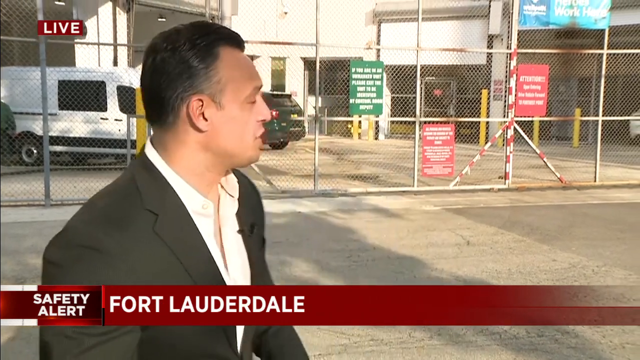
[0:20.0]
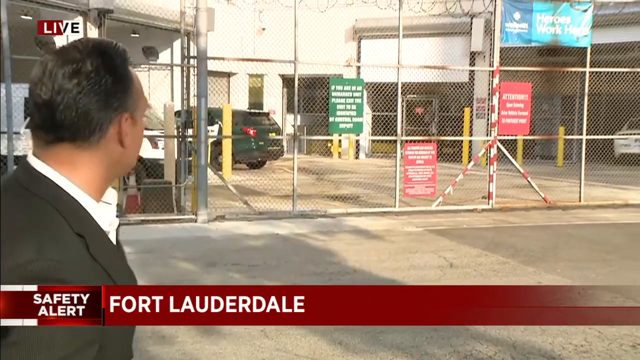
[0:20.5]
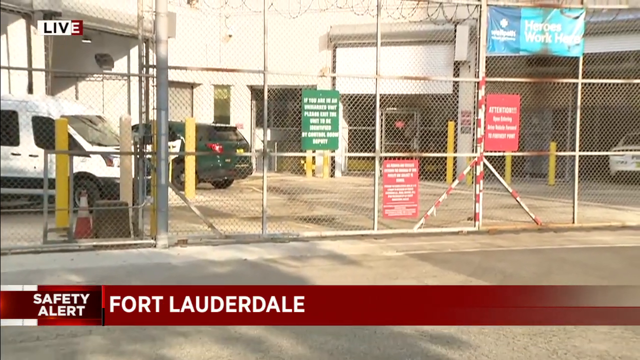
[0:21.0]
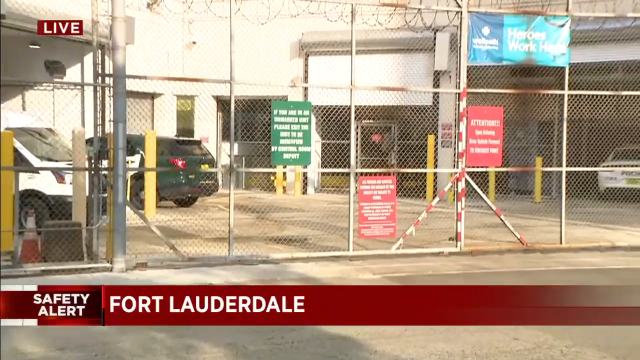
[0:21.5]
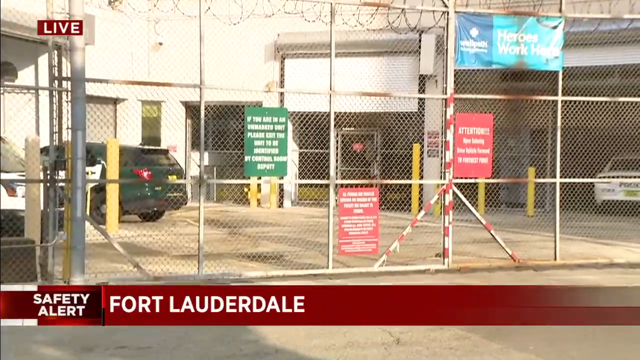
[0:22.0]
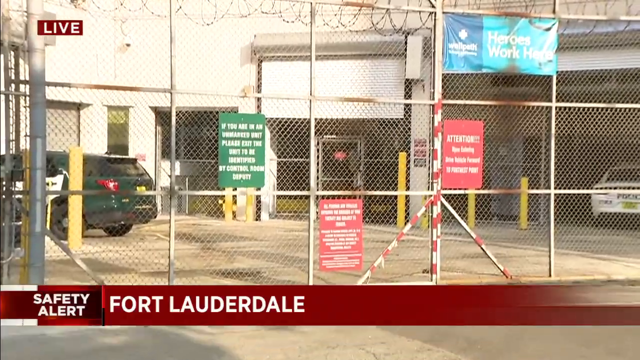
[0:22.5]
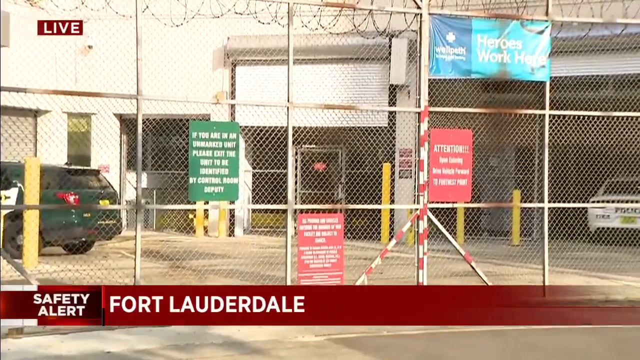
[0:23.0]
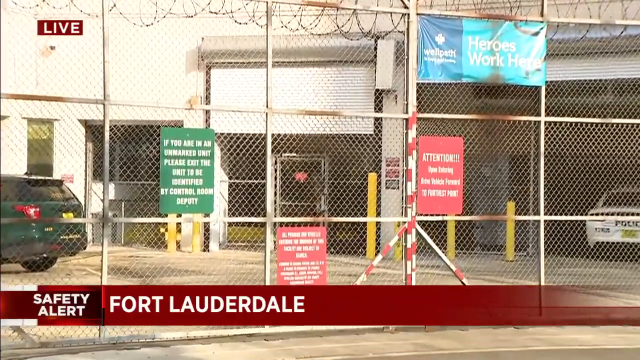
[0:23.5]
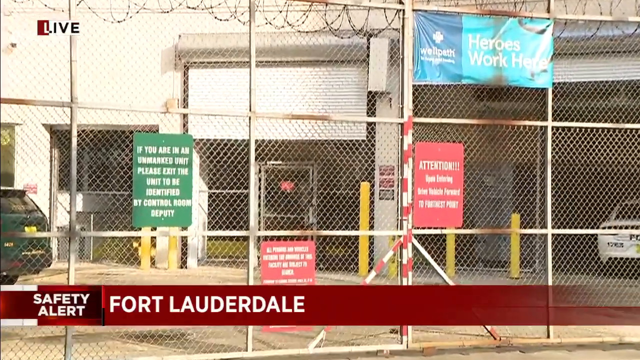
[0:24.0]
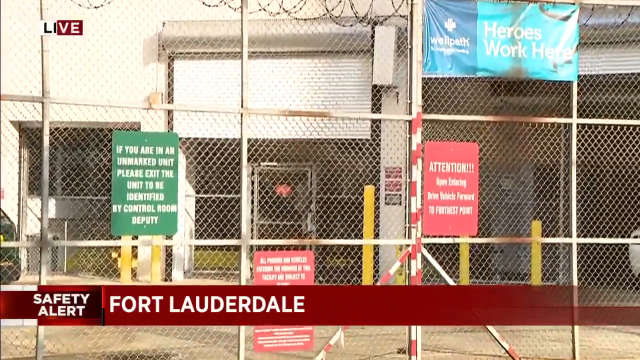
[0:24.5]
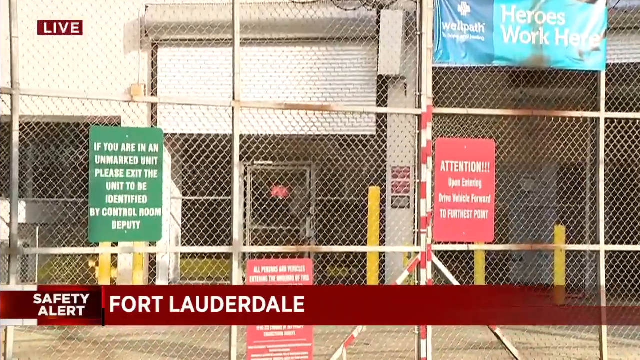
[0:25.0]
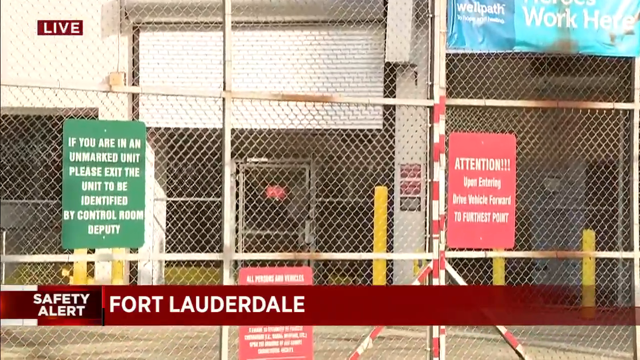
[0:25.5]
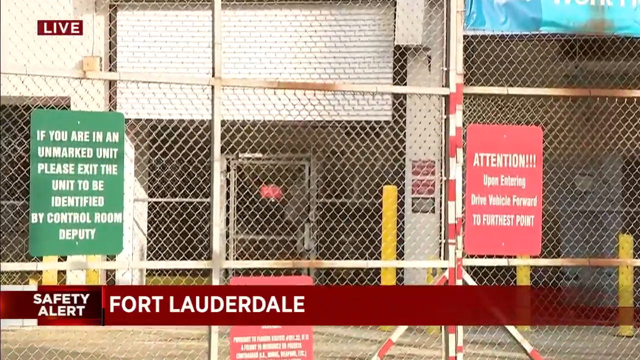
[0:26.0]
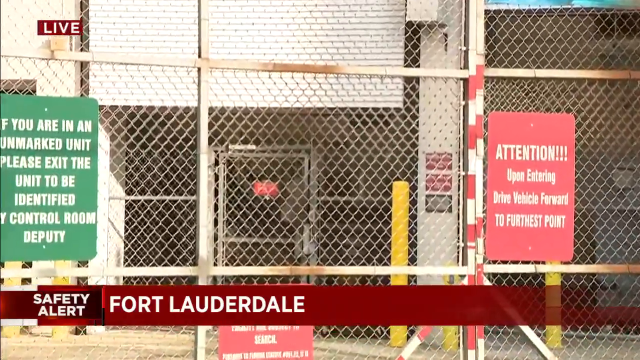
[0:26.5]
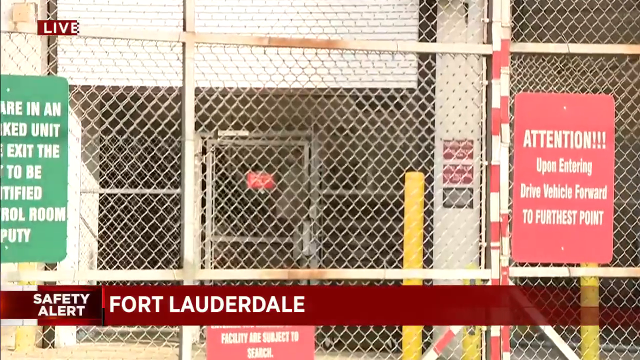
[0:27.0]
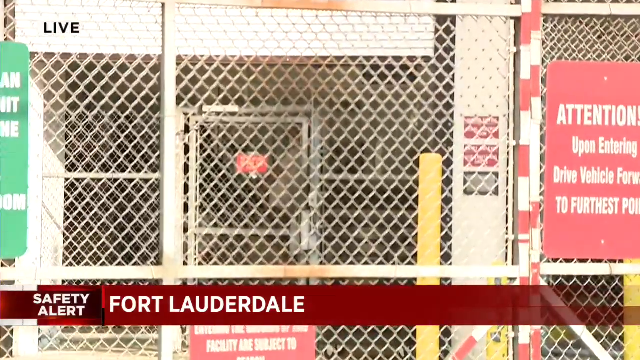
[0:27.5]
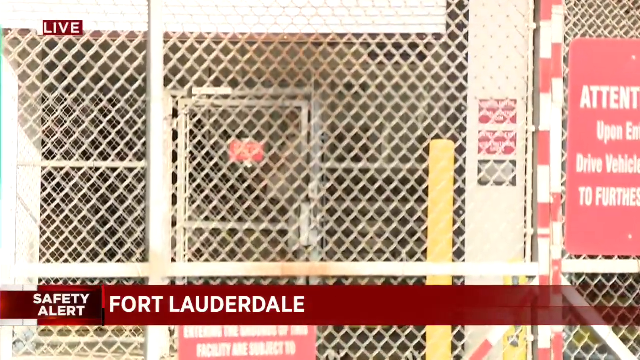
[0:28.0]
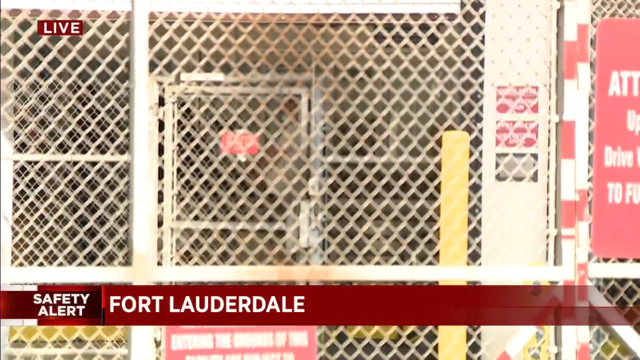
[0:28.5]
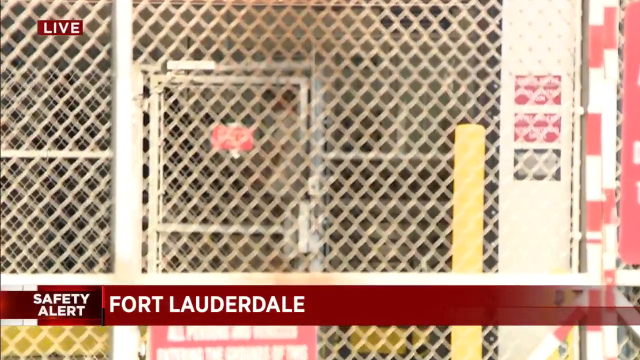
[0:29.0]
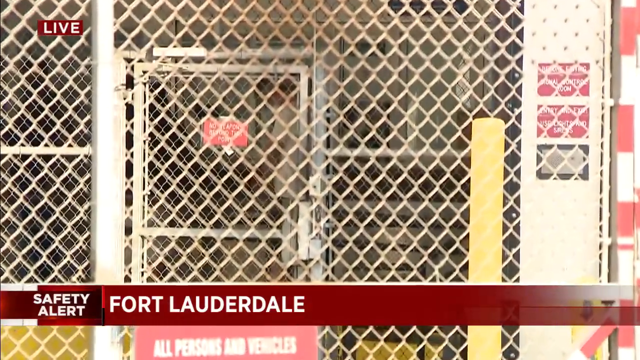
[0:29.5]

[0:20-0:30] Roy Ramos is on the ground in Fort Lauderdale. Behind him, a sign says "if you are in an unmarked unit please exit the unit to be identified by control room deputy", and another sign says "attention upon entering drive vehicle forward to furthest point". Behind a fence is apparently the police department. The arrested officer appears to look ashamed.